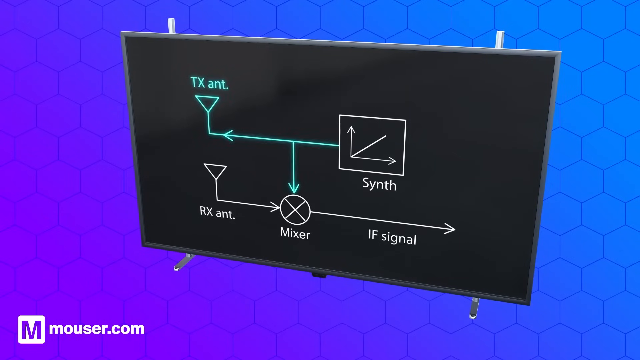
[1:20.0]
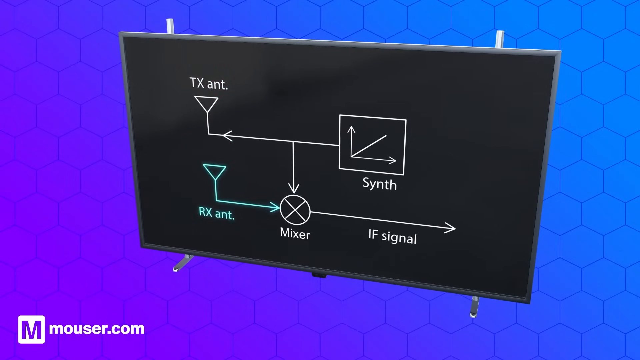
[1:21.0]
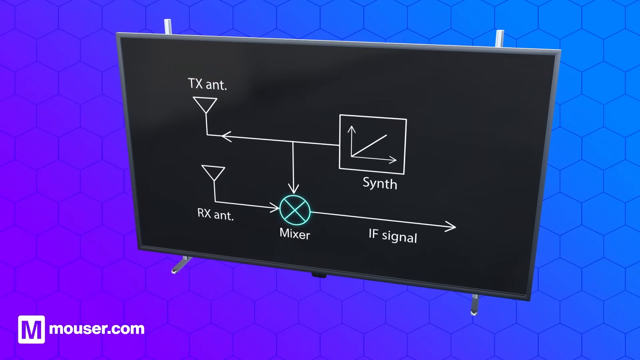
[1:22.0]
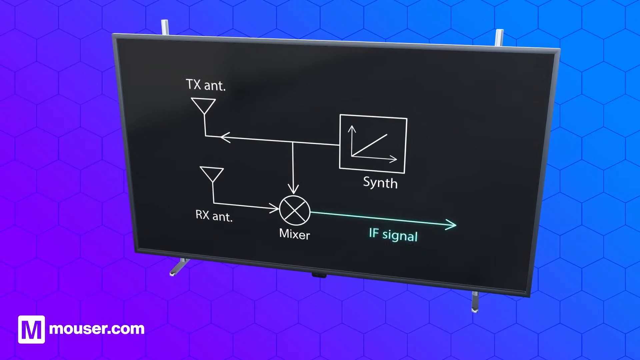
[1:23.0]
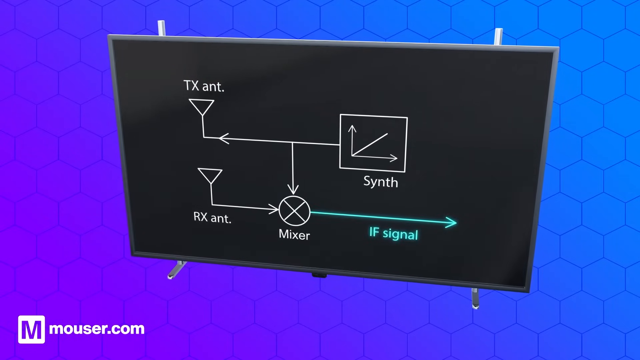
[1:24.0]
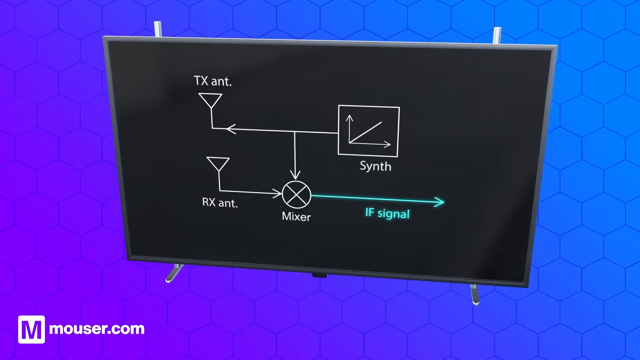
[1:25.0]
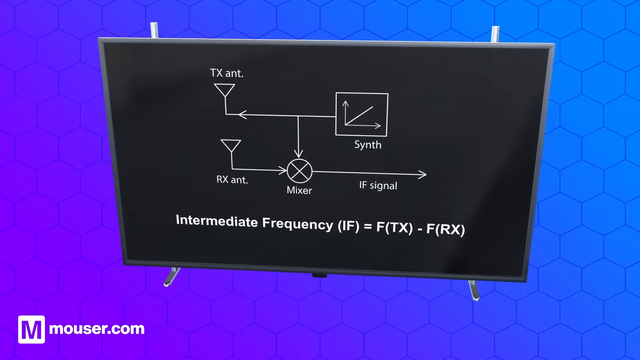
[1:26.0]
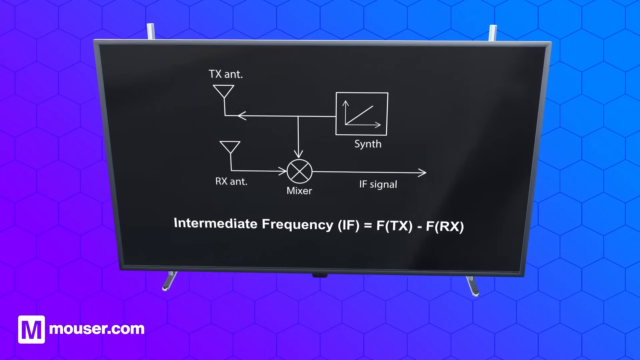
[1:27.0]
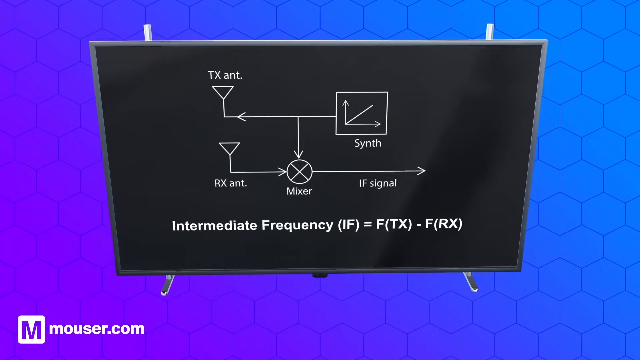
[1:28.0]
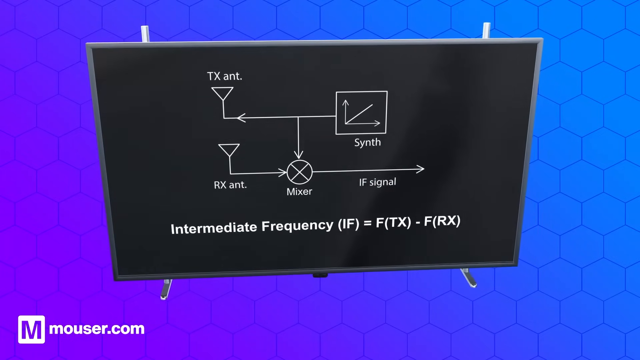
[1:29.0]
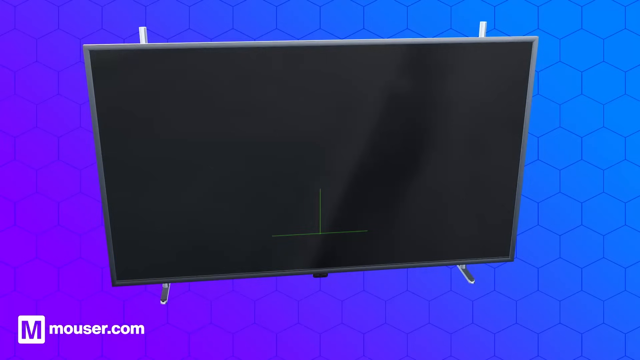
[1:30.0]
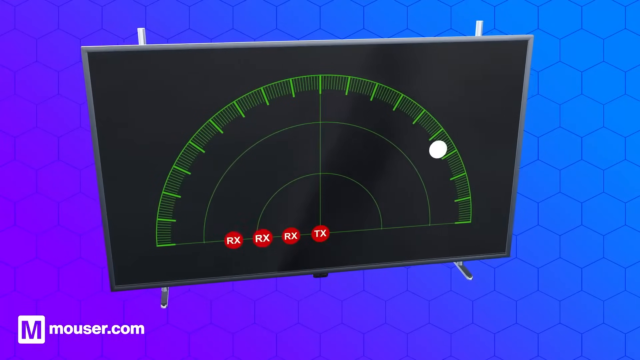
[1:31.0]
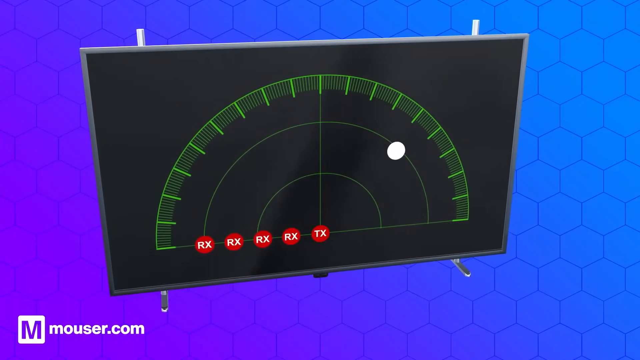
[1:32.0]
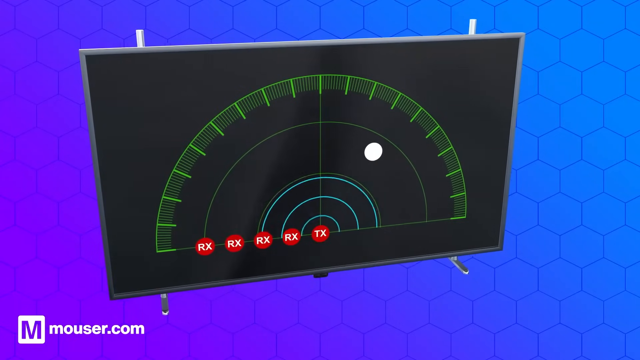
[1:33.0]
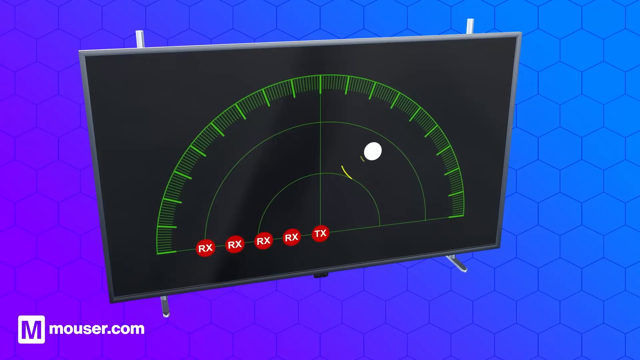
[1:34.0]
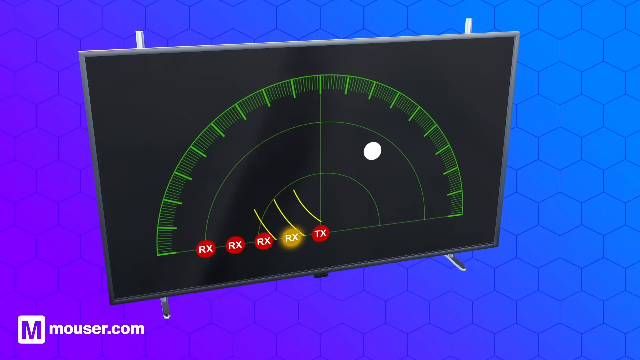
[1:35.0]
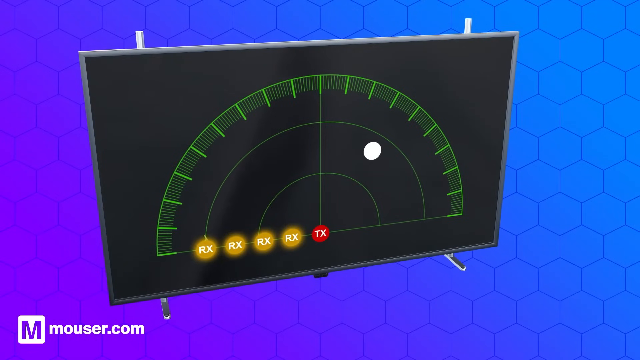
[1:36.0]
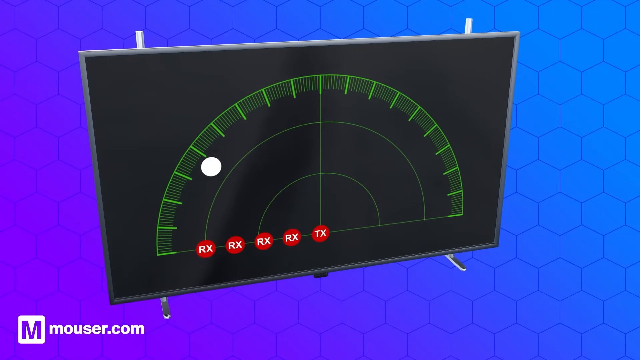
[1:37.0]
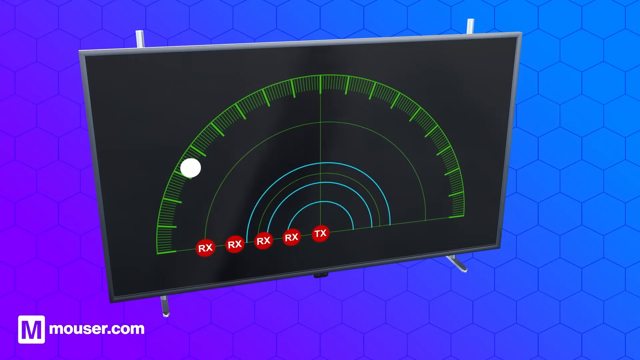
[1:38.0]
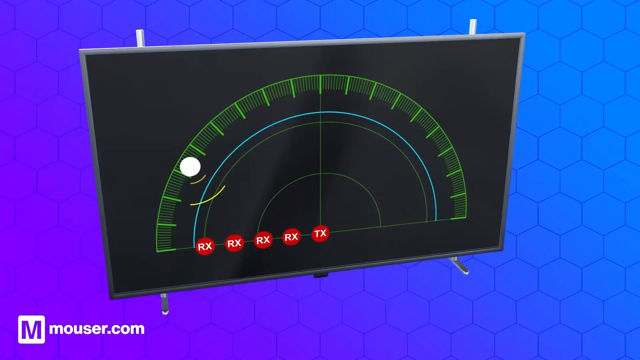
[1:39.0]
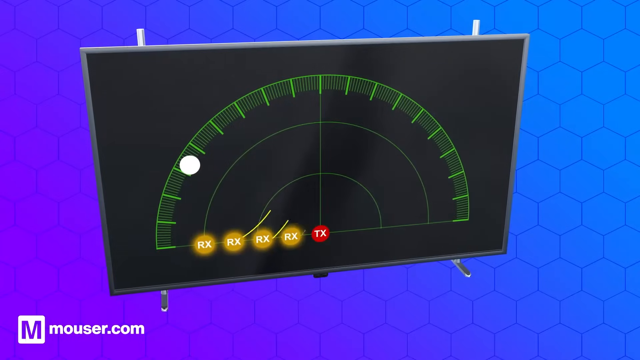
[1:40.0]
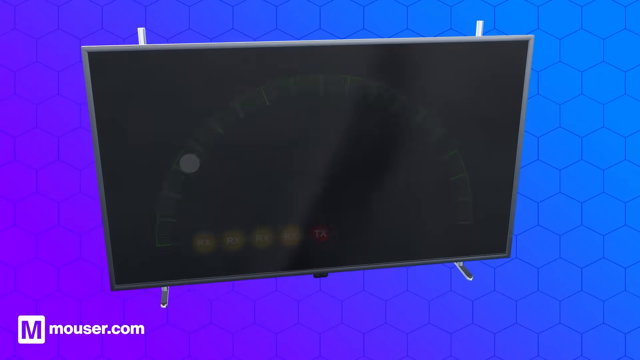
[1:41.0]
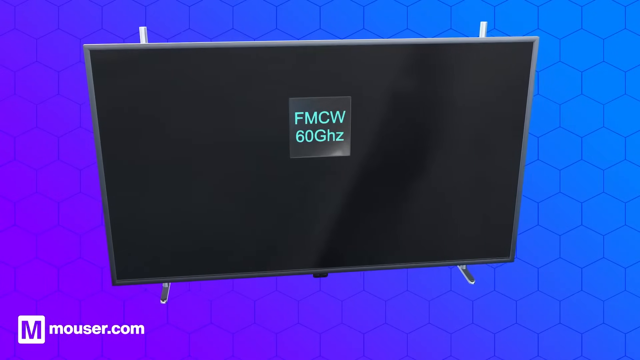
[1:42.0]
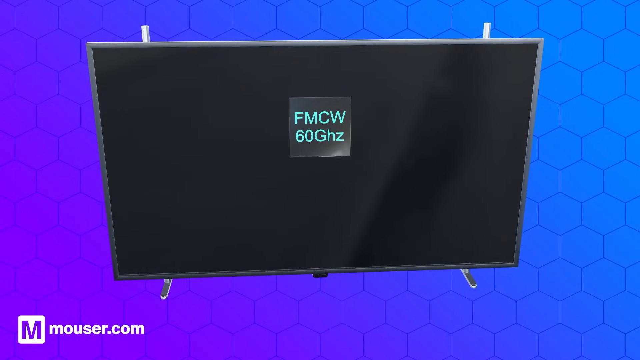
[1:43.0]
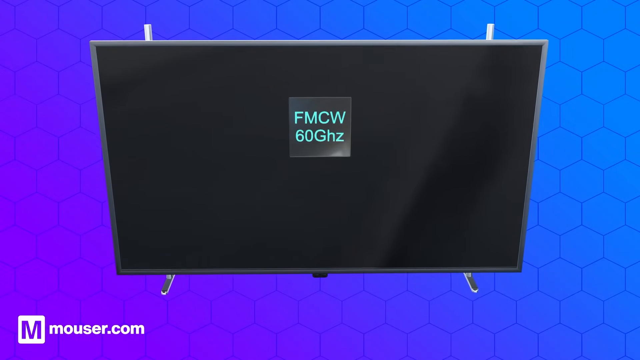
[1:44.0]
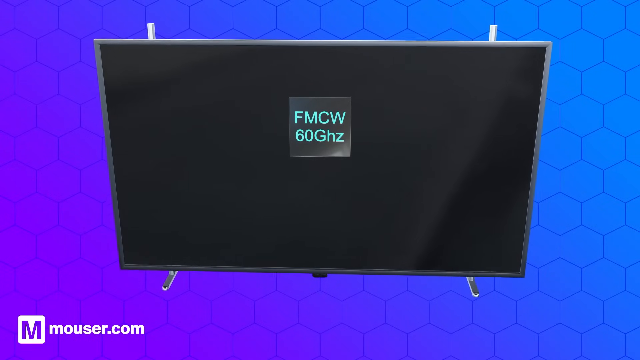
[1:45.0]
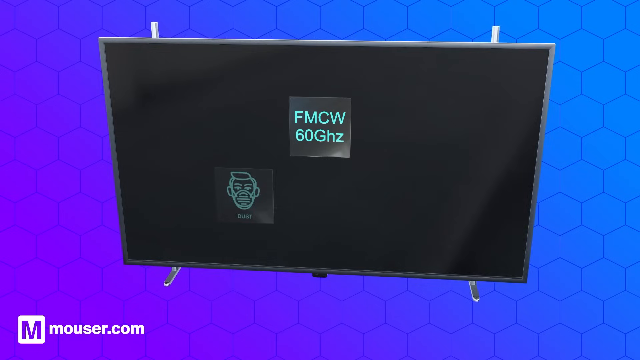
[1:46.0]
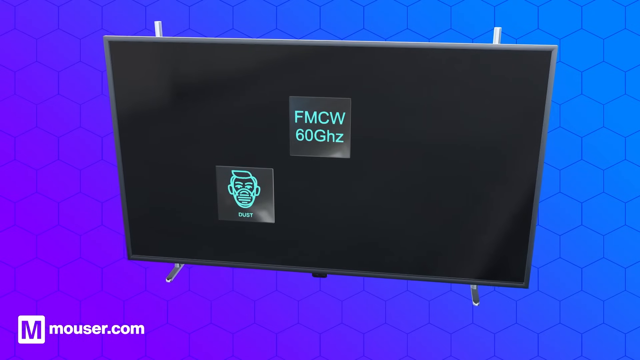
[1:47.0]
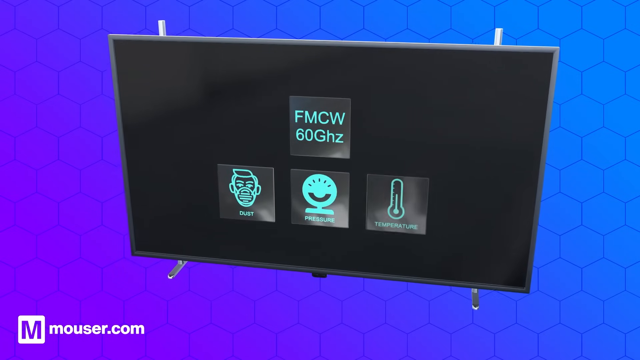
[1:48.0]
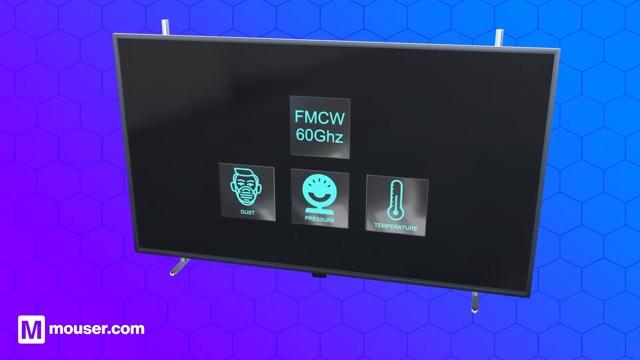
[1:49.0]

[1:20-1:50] On a plain bright blue screen with a barely visible honeycomb pattern, a large black TV monitor that appears to be computer-generated is in the center. The plain black monitor has a large diagram in the middle, drawn in teal green and white, with arrows pointing both left and right, and different segments of the diagram are highlighted over time. Several seconds later, the words "intermediate frequency" appear at the bottom of the screen along with an equation for this frequency. A radio signal is then shown, with a signal emanating throughout the diagram and a white ball bouncing around it. Next, "60 gigahertz" appears in the middle of the TV monitor, with several icons displayed below it.